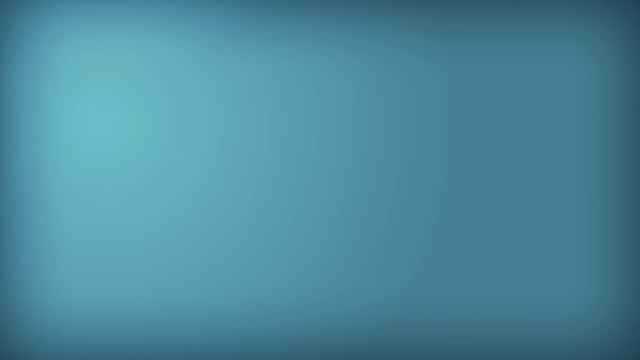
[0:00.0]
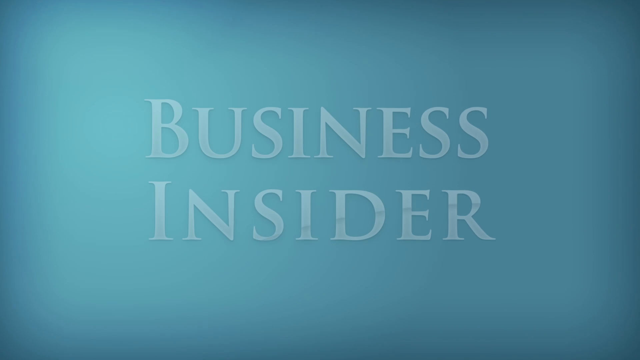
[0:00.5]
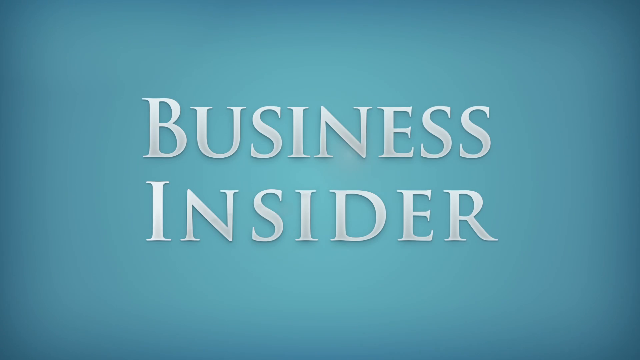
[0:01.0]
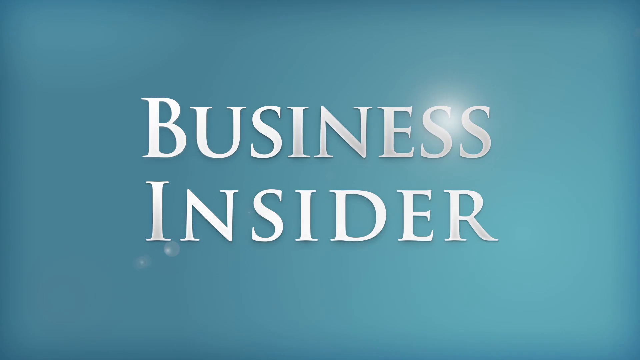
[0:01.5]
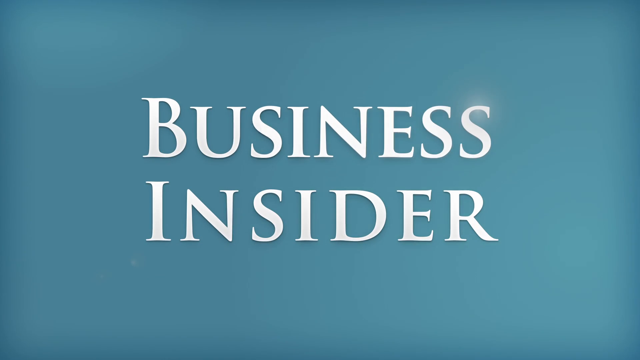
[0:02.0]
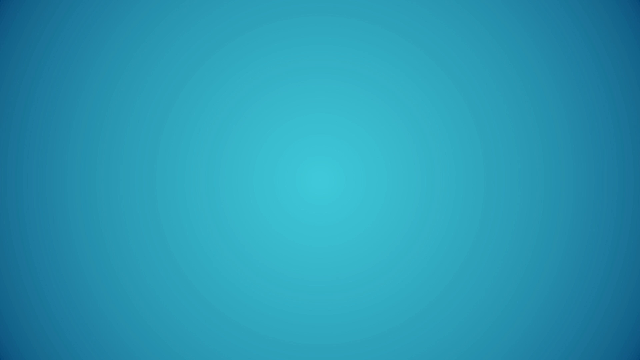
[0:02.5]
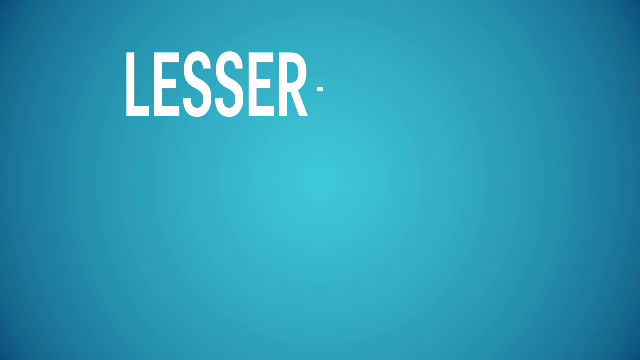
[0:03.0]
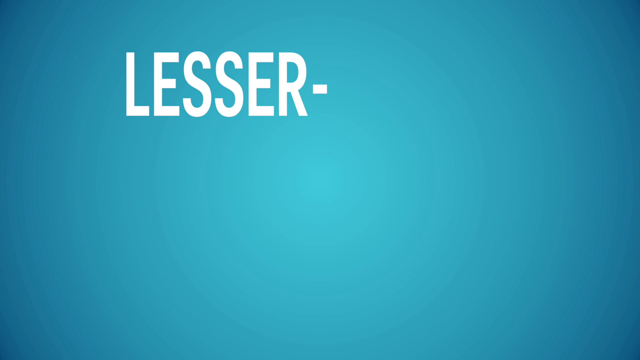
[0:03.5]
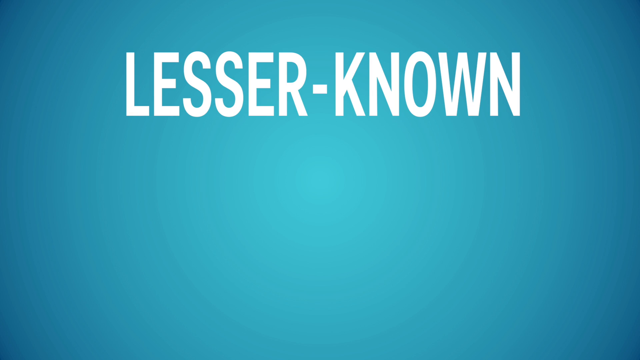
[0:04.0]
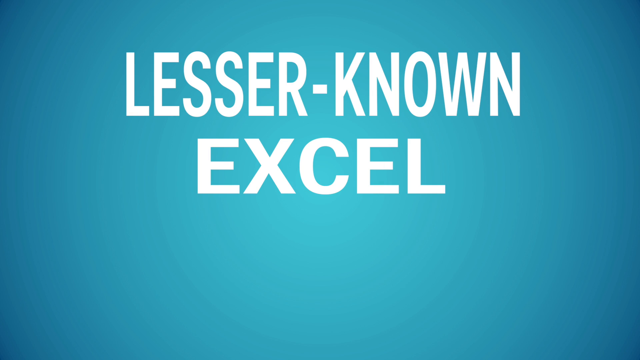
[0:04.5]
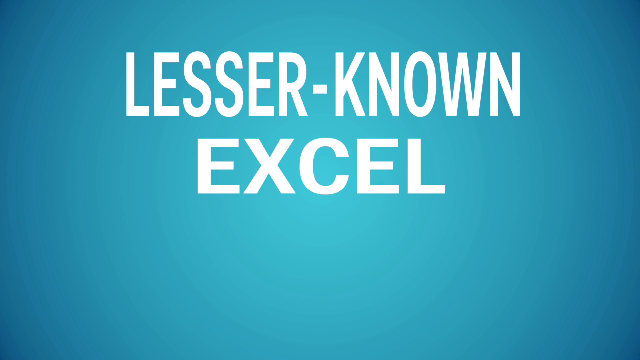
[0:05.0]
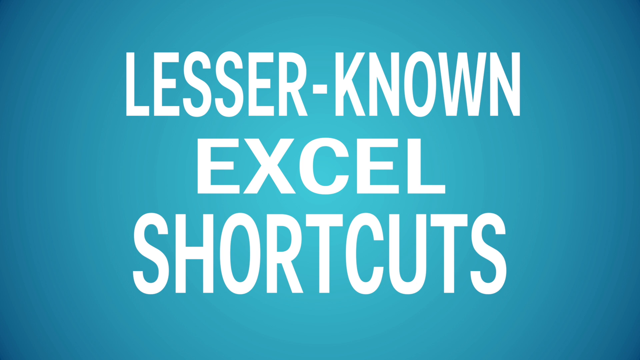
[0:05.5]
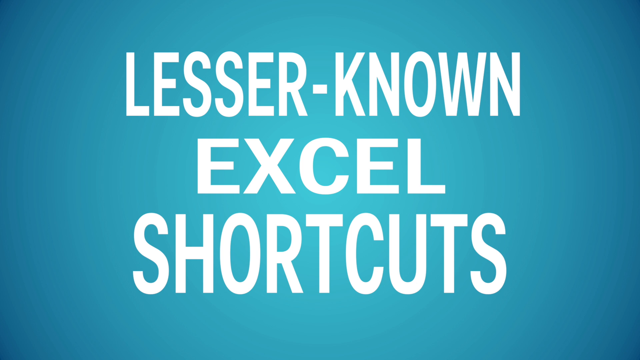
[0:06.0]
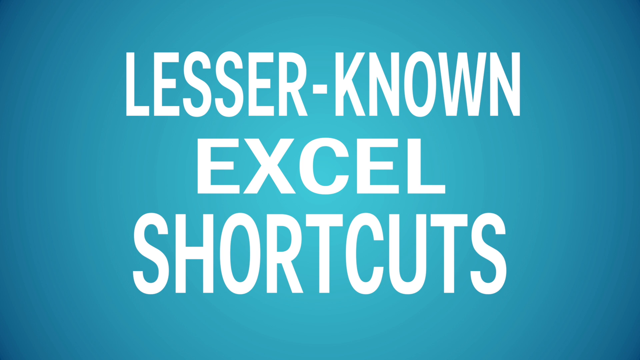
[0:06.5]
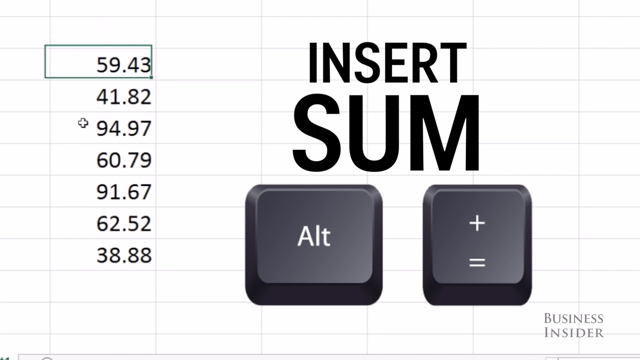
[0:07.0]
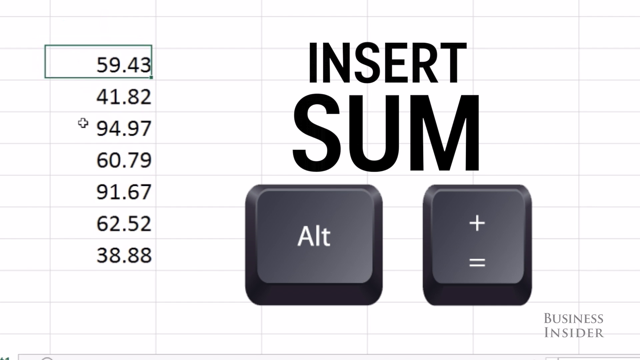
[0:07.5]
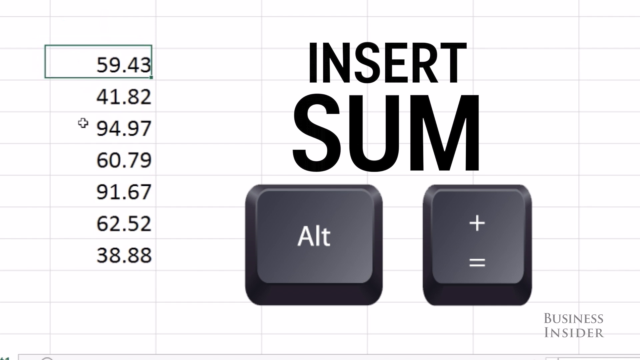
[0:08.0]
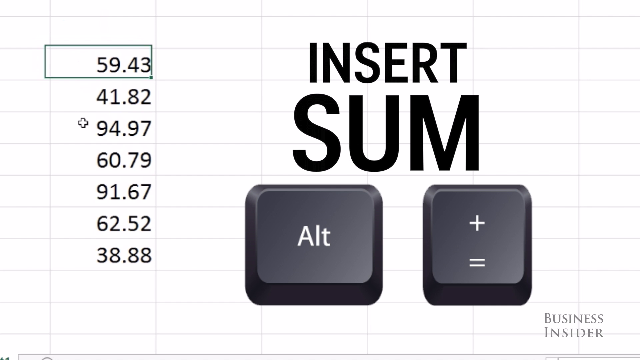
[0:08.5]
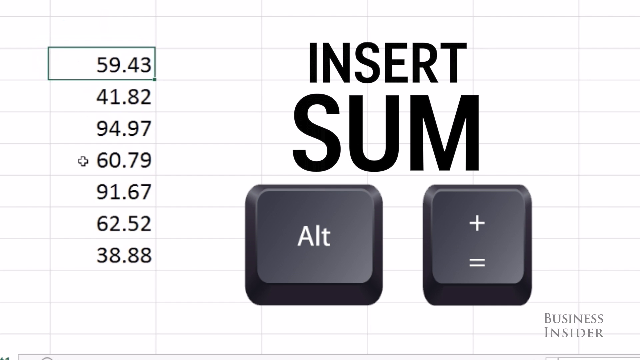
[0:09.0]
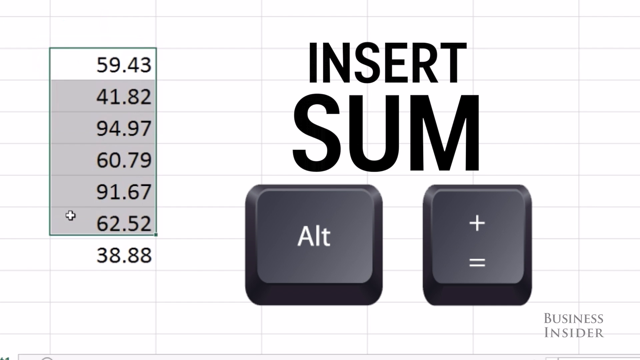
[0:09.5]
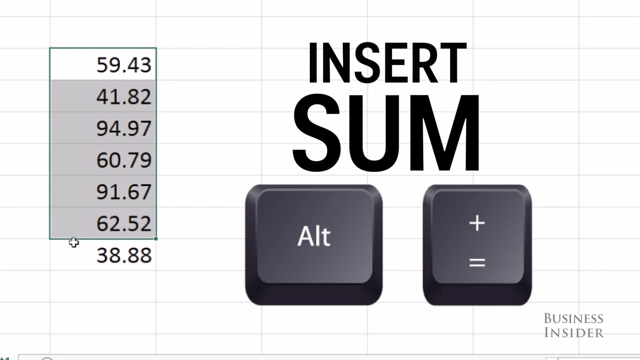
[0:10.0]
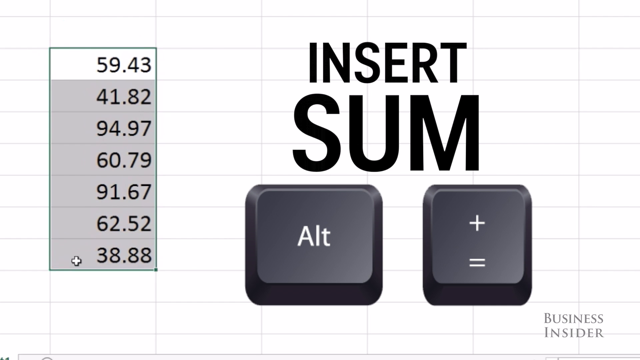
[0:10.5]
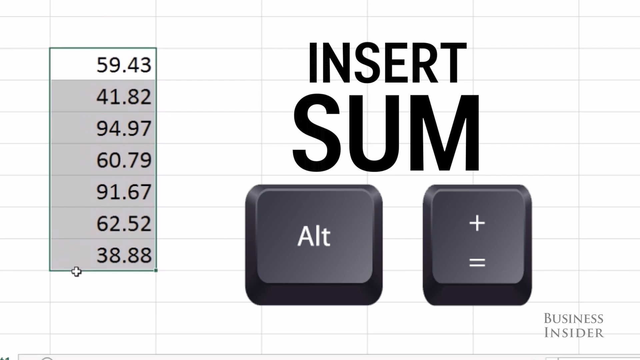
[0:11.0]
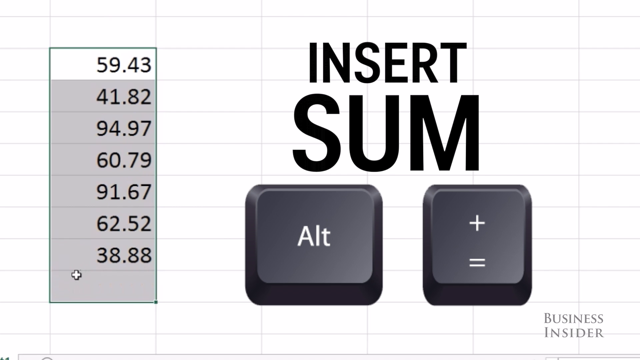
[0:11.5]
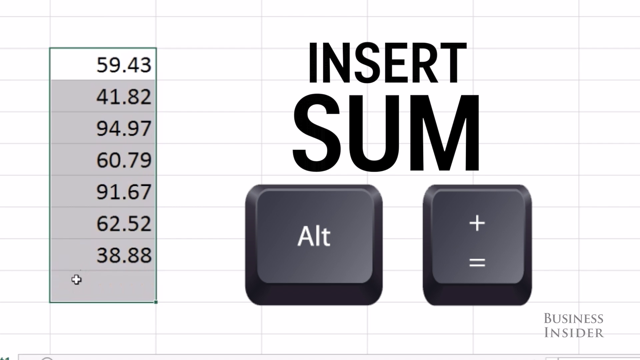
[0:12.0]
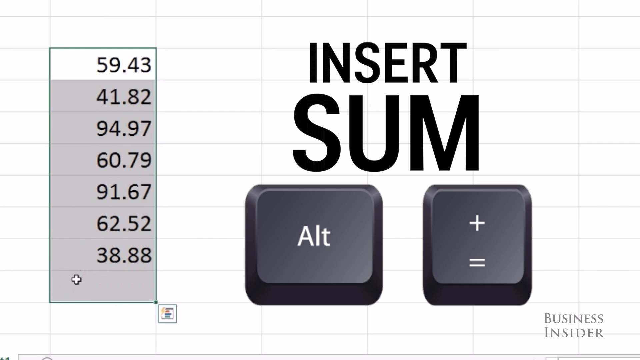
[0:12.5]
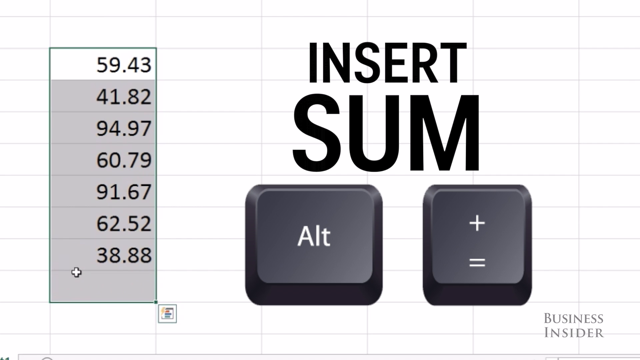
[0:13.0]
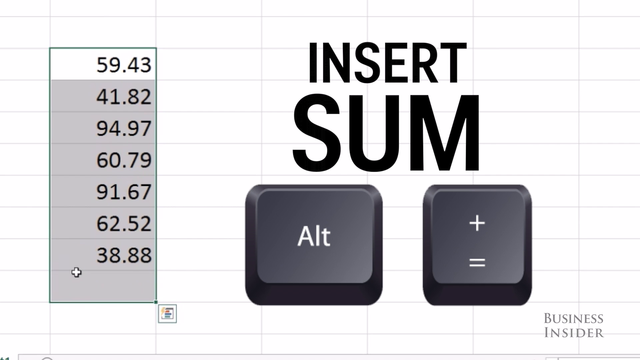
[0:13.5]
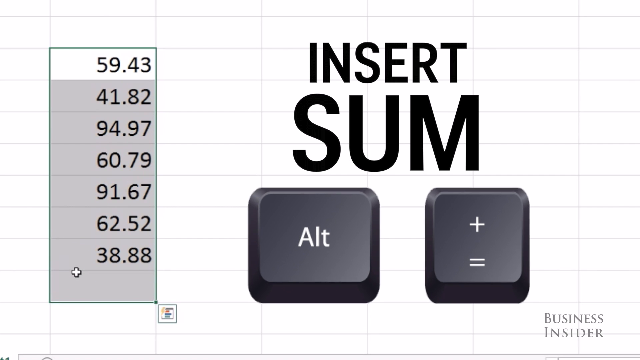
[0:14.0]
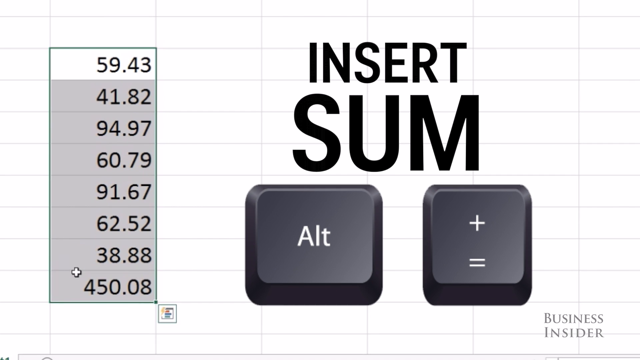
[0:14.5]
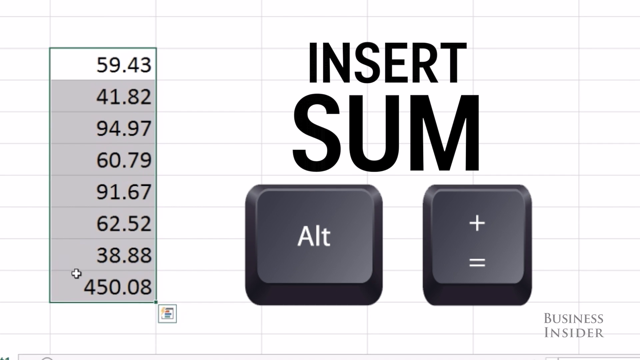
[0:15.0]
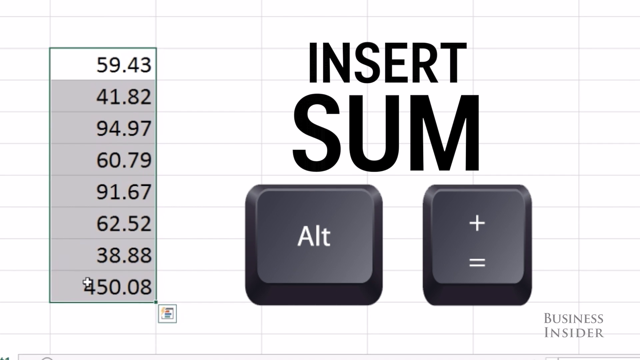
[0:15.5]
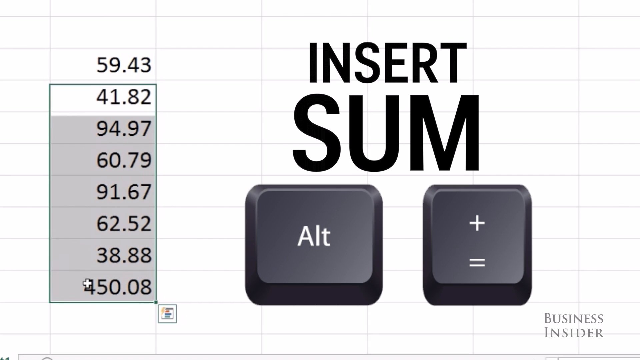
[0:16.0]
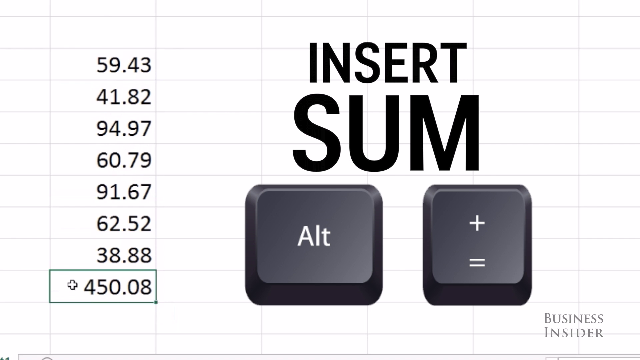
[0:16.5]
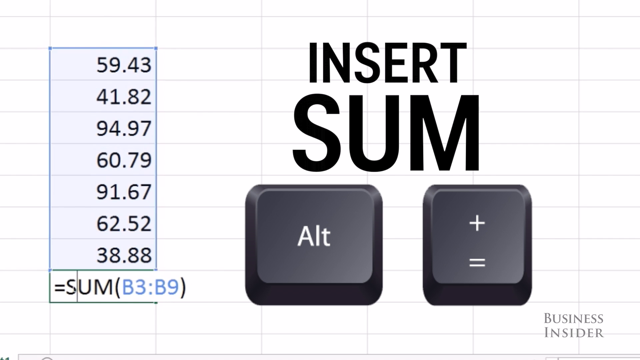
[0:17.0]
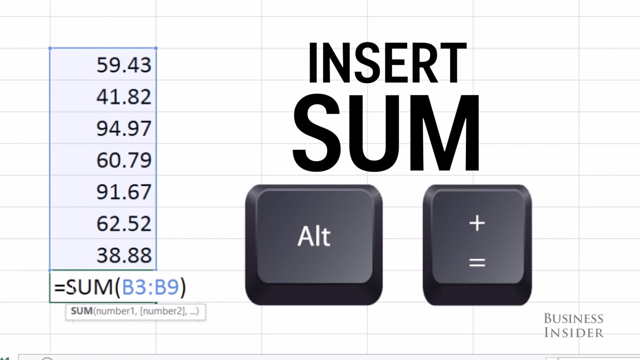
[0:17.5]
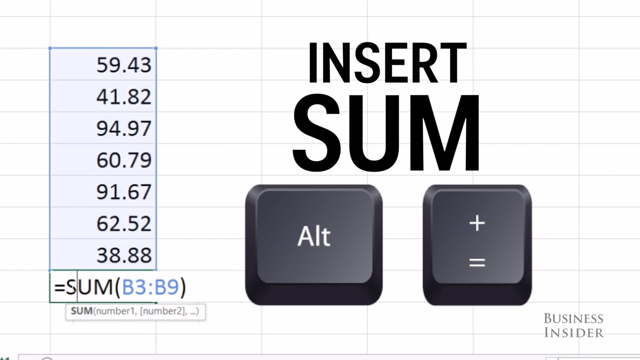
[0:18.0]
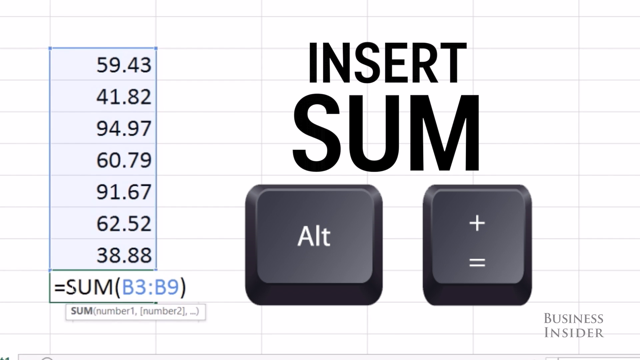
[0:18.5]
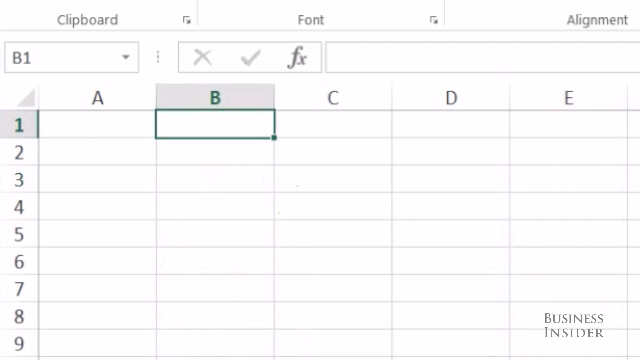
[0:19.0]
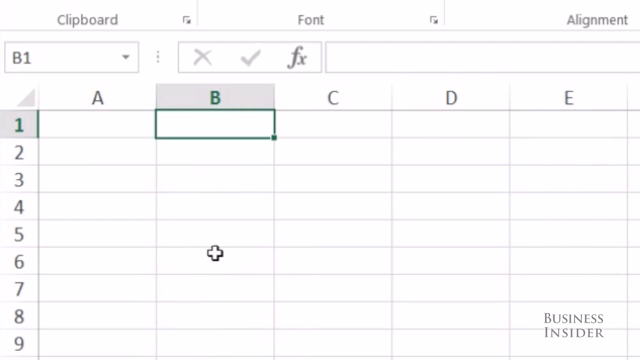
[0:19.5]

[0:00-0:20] The video opens on a light green background with "Business Insider" in the middle of the screen. The screen then changes to a different green background with the text "Lesser known Excel shortcuts." Next, a graph that looks like an Excel sheet is pulled up. On one side, some numbers are highlighted by a pointer, and on the right side the text "Insert sum" appears. Computer keys pop up on the screen: one key says "Alt" and the other shows a plus and an equal sign. Someone clicks on them, the numbers off to the left side seem to change, and "SUM" appears at the bottom.